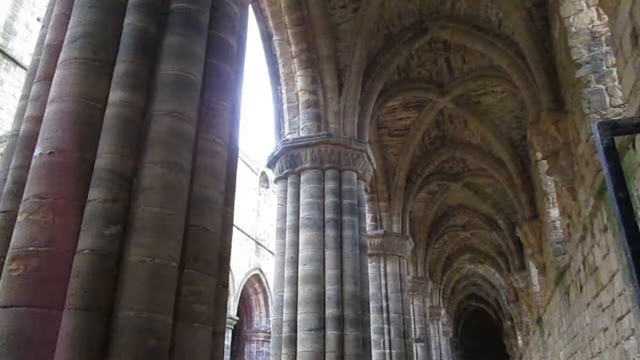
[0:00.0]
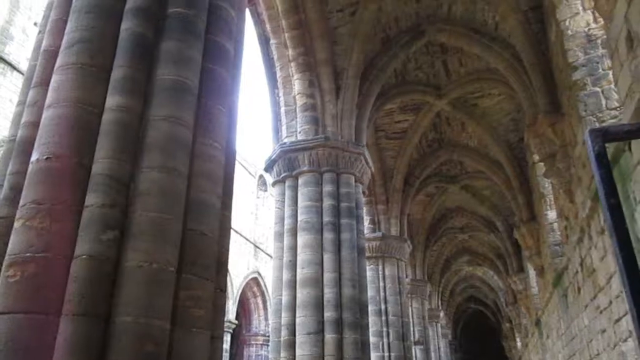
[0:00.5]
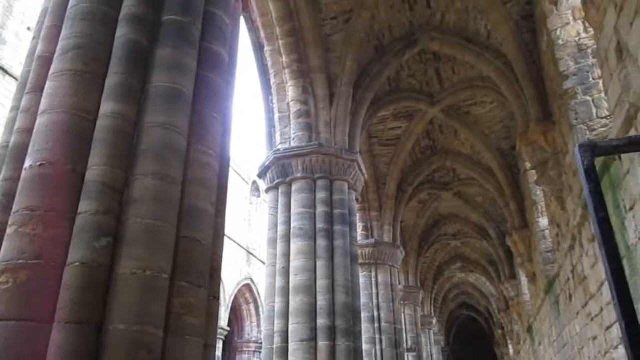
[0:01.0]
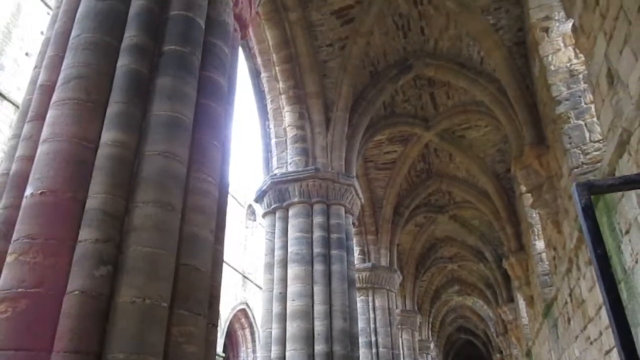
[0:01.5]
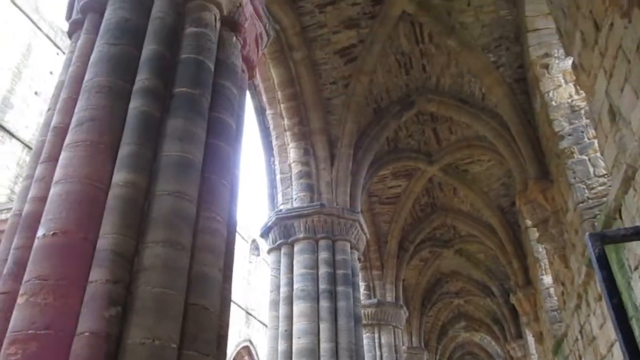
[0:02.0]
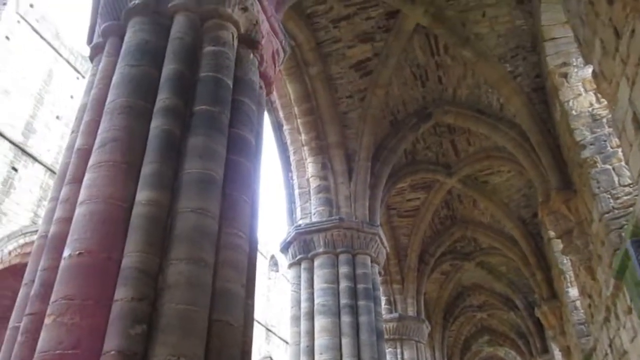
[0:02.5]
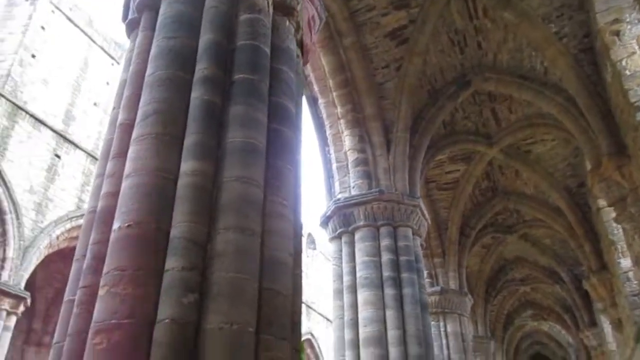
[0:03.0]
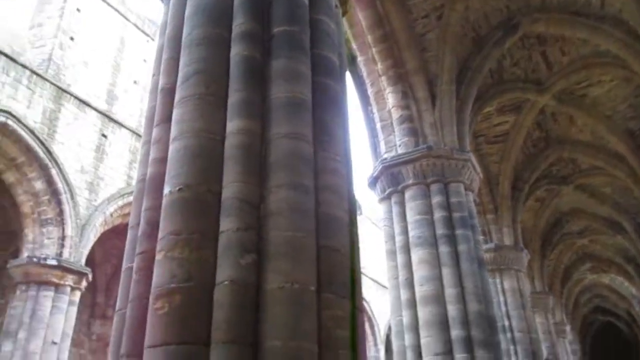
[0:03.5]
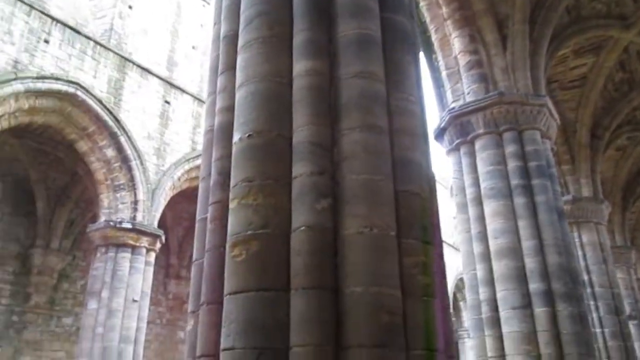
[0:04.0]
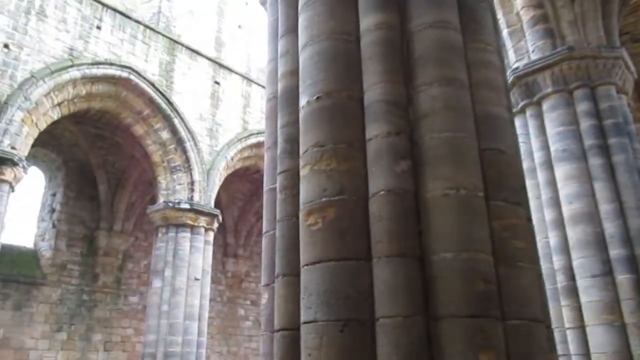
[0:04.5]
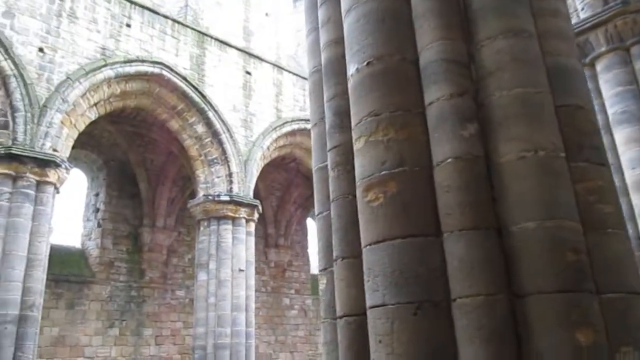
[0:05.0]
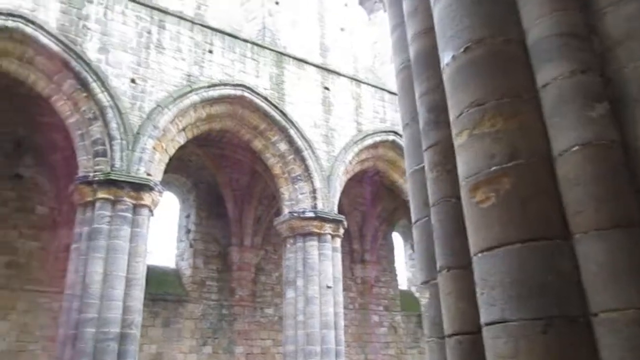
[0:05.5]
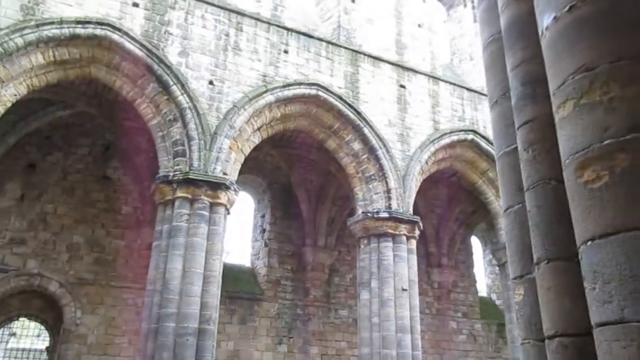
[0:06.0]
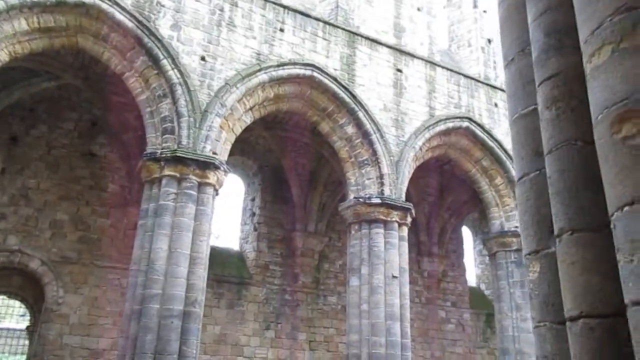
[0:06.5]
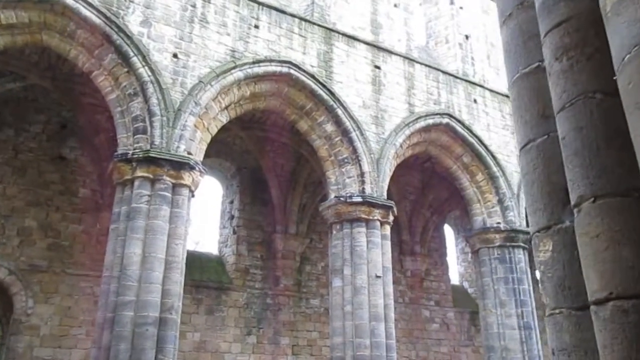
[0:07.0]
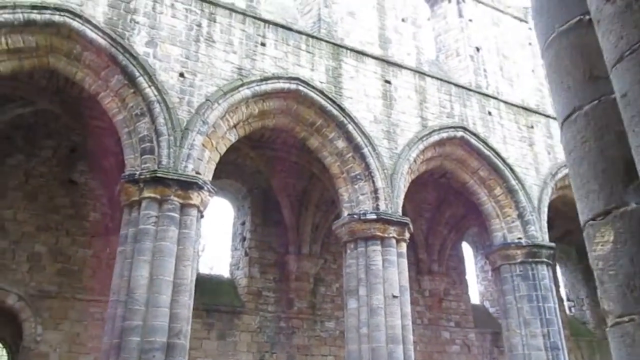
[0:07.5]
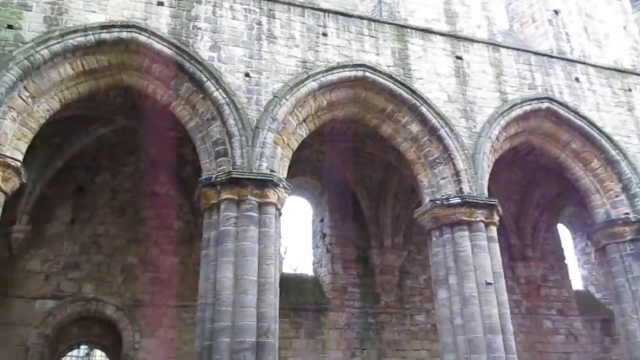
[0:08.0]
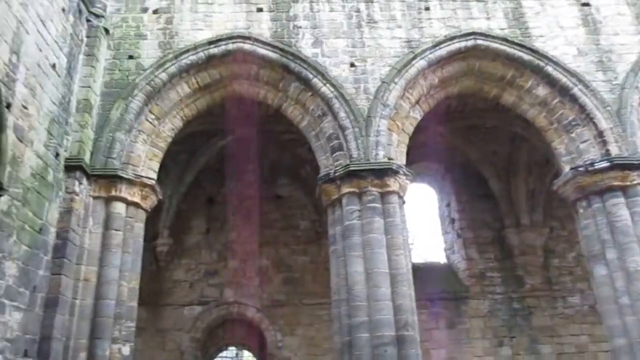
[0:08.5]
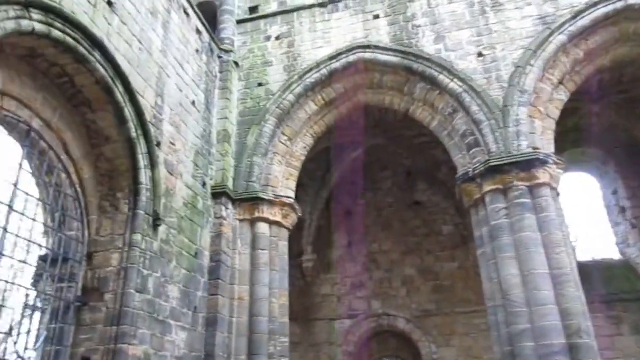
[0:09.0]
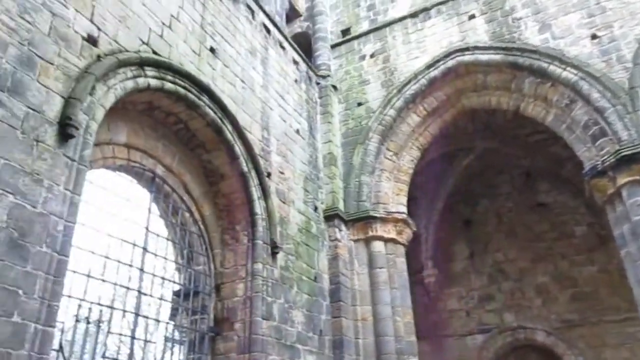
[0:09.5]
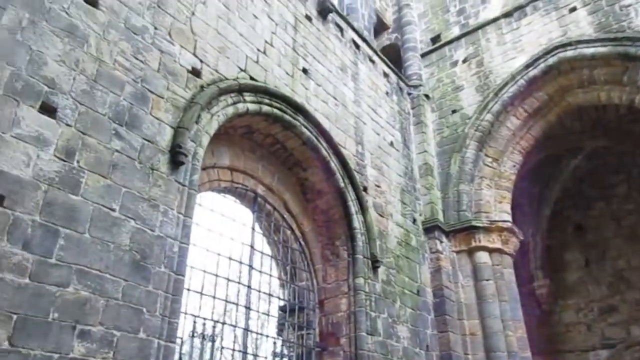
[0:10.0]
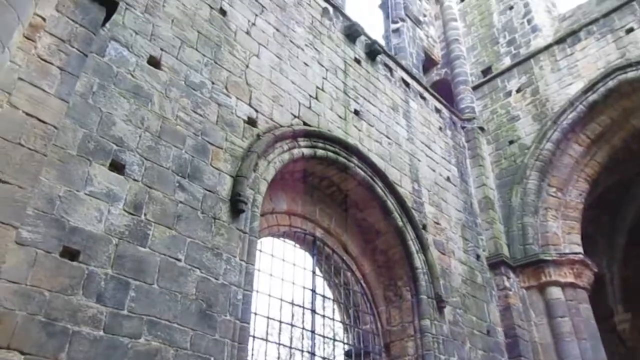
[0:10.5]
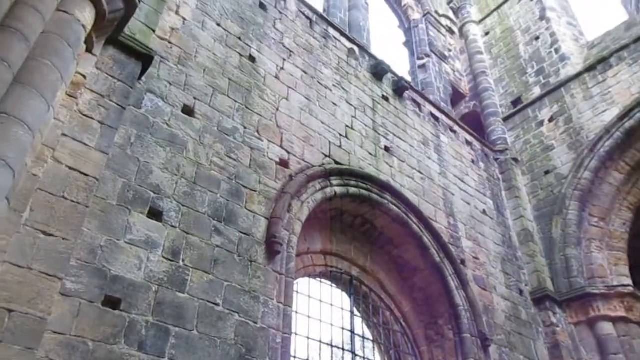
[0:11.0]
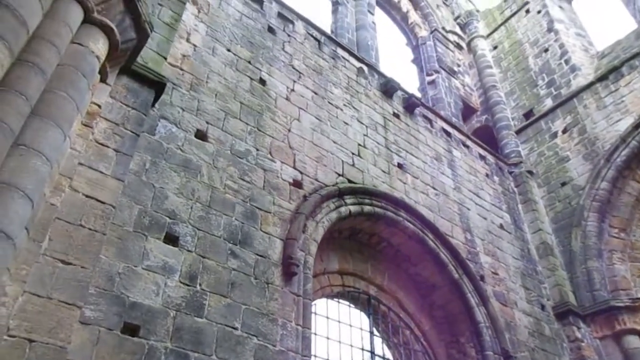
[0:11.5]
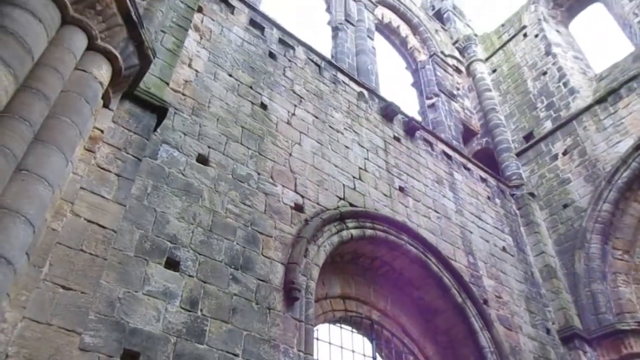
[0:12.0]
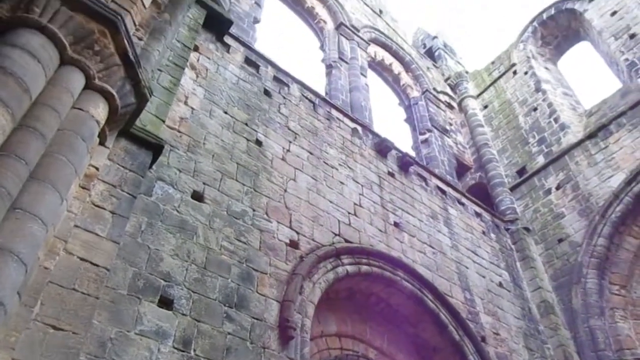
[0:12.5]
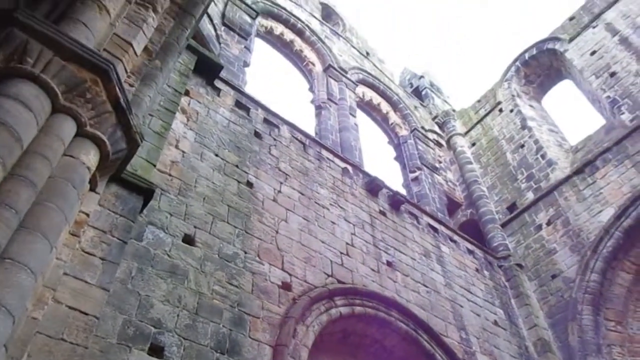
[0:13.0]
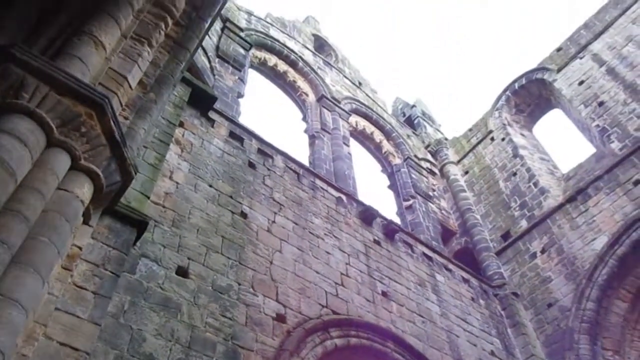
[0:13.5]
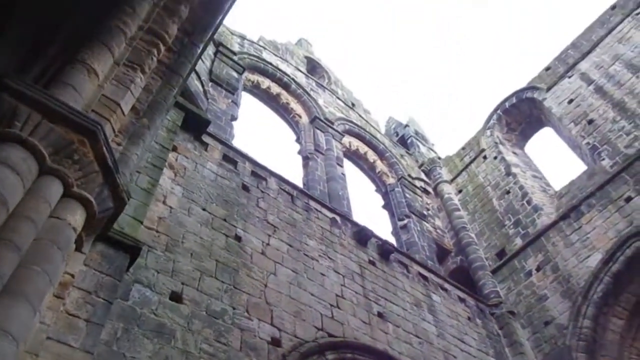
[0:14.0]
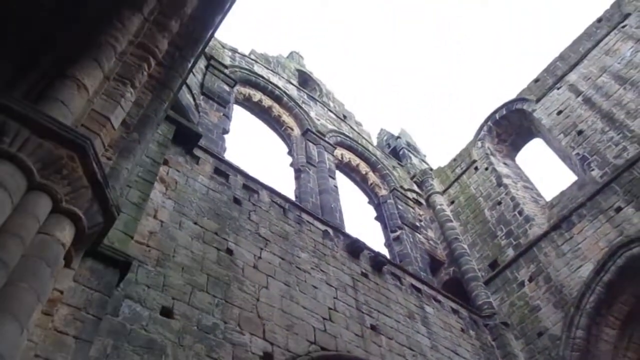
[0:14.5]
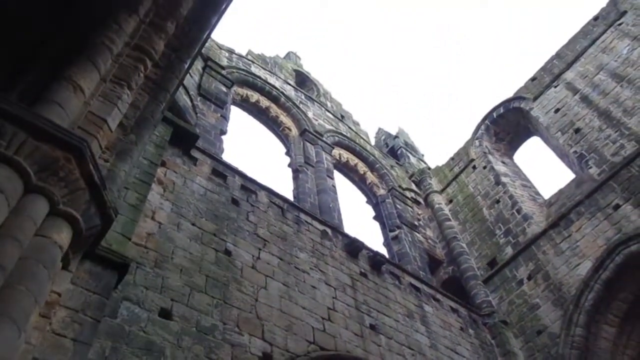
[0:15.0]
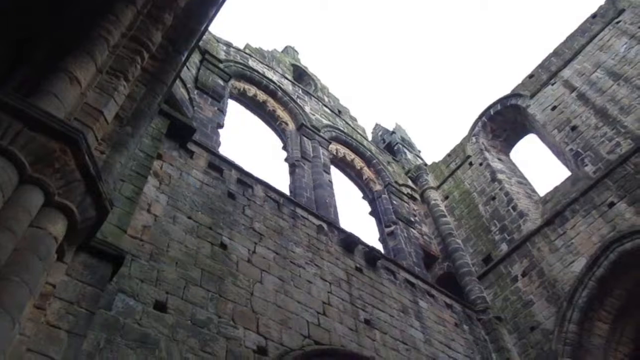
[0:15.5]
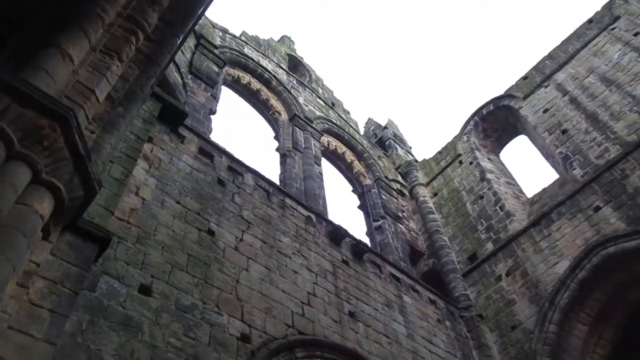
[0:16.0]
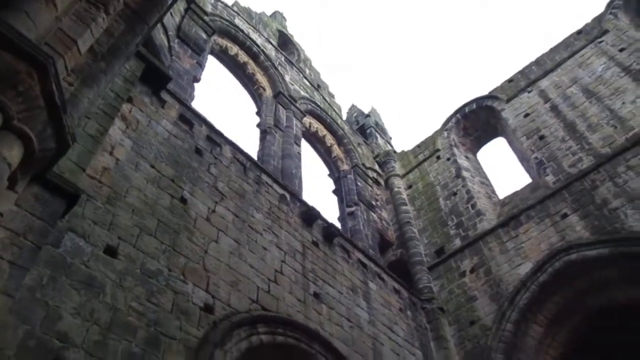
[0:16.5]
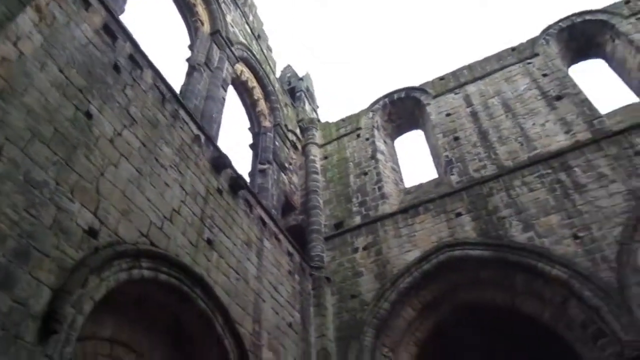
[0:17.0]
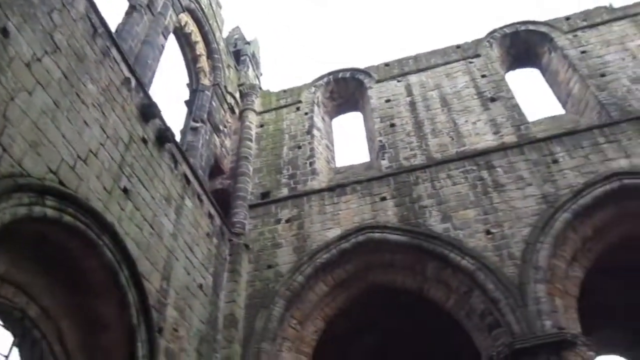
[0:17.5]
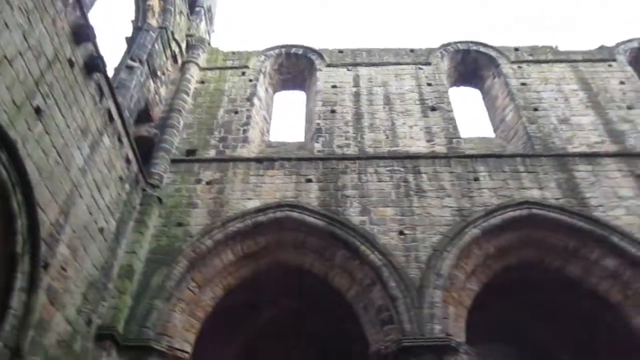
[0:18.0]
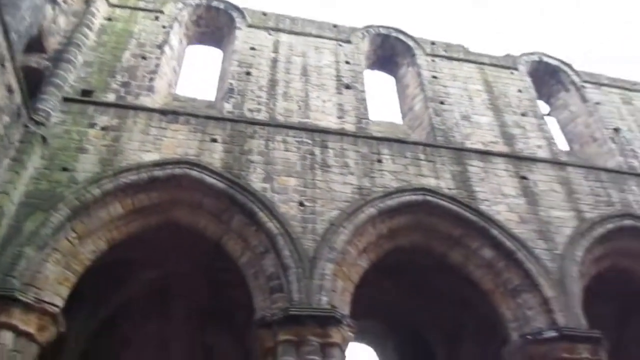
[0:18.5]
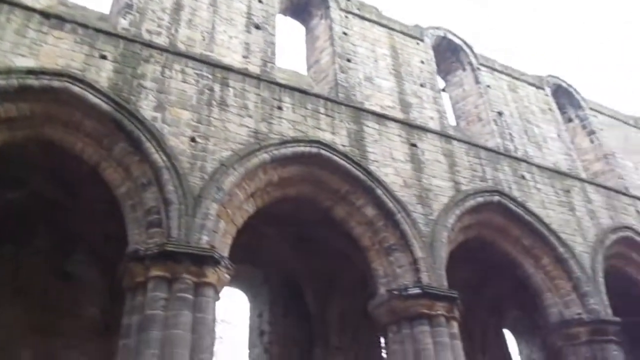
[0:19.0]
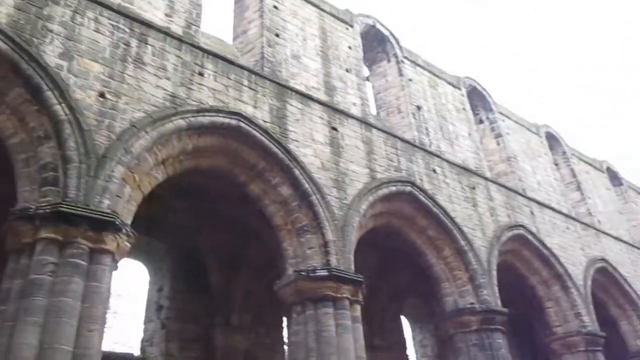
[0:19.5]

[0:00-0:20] The video is shot from the perspective of someone looking up from underneath some sort of structure. On the right is a wall, and on the left are archways supported by pillars; the material seems to be marble. Above is a vaulted ceiling. To the left, through the archways, it is outdoors and daytime. The camera pans upward for a moment and then to the left to show another similar structure on the left side, then pans further left to show a connecting wall joining both structures together. In that structure there is an archway leading to a window, with archways above it on the wall. The camera looks directly up at the top of the structure and shows the sky above; it appears to be a cloudy day. The camera then pans right and down, showing the structure on the left.